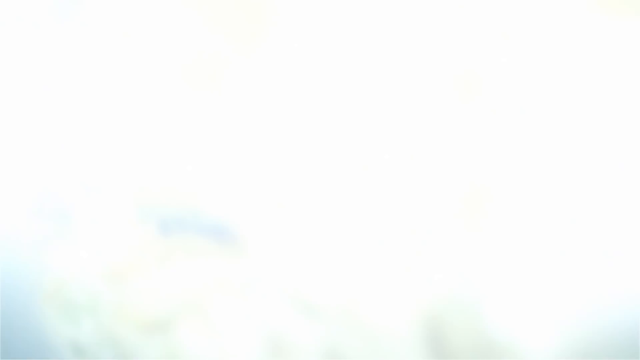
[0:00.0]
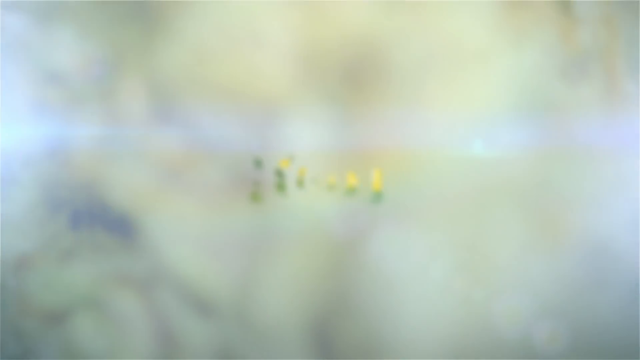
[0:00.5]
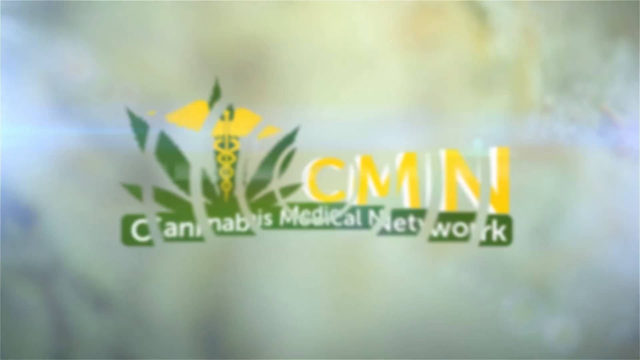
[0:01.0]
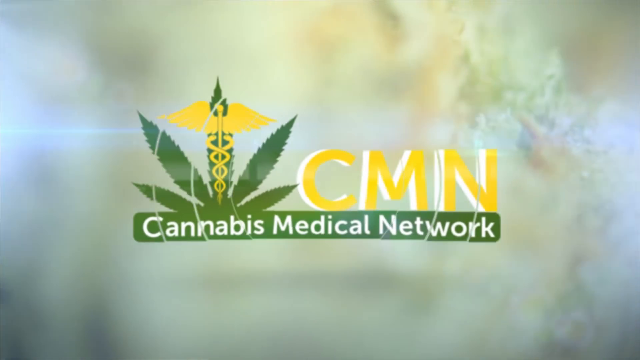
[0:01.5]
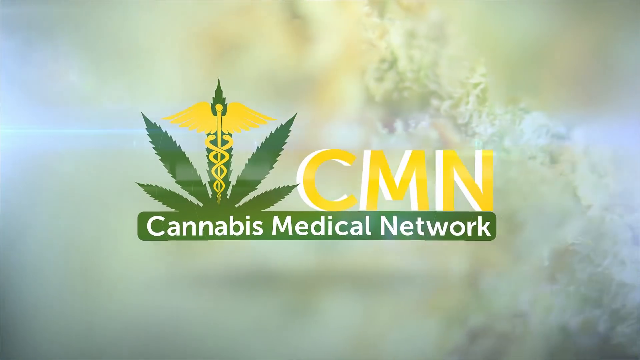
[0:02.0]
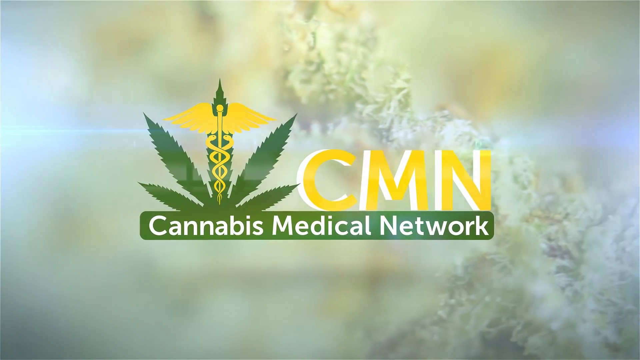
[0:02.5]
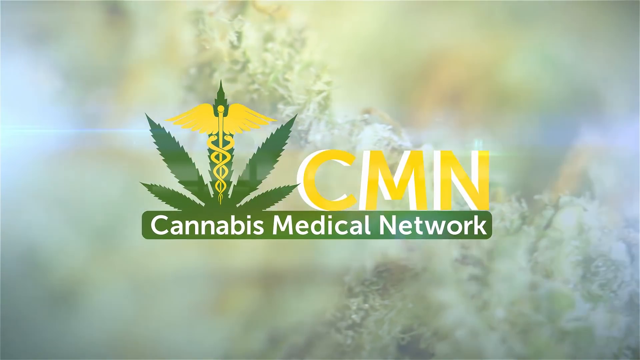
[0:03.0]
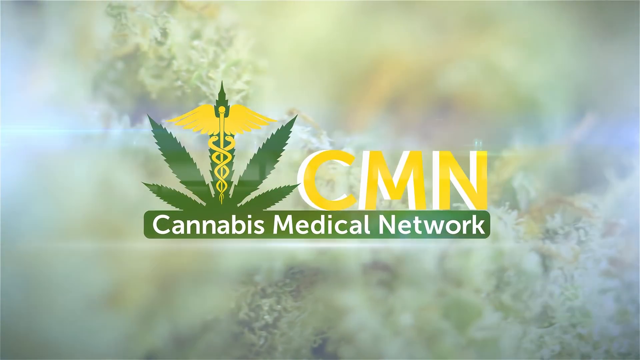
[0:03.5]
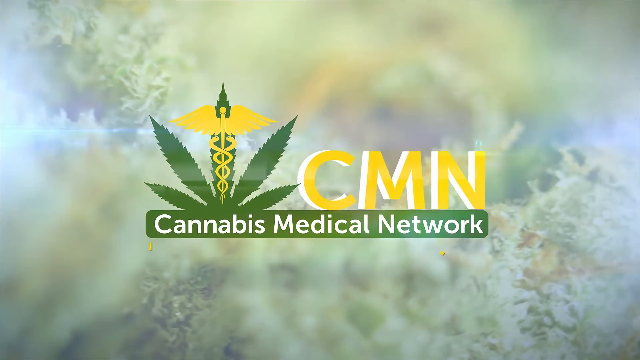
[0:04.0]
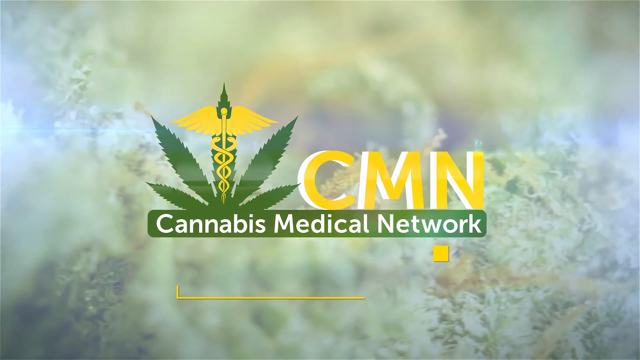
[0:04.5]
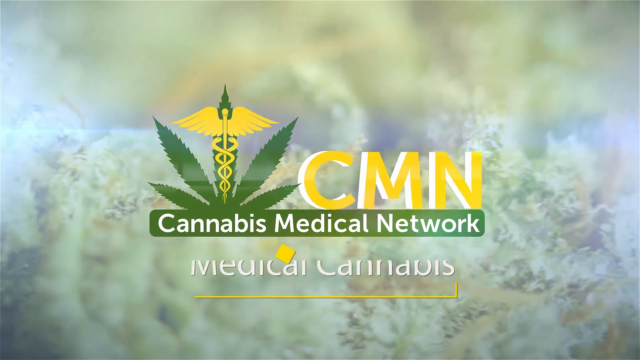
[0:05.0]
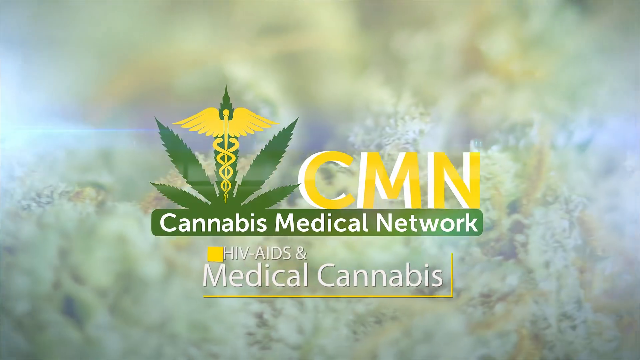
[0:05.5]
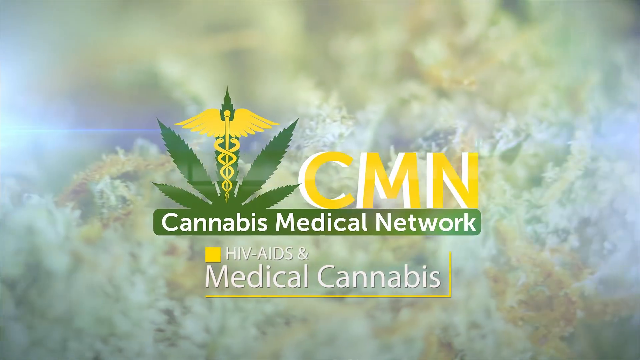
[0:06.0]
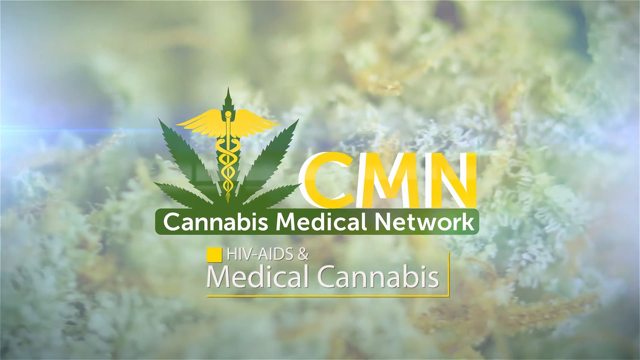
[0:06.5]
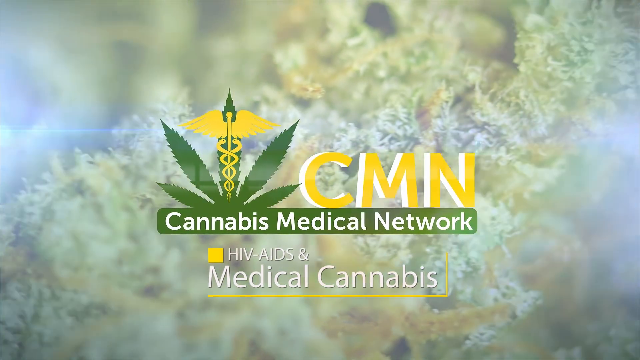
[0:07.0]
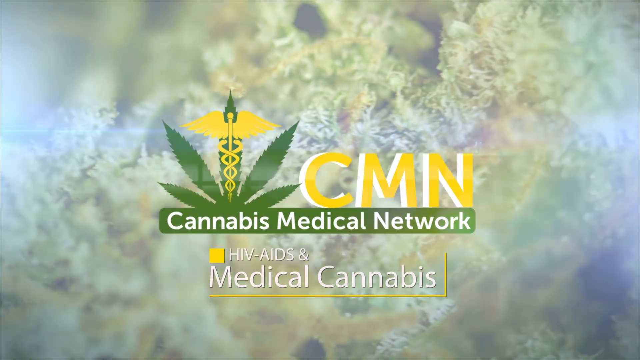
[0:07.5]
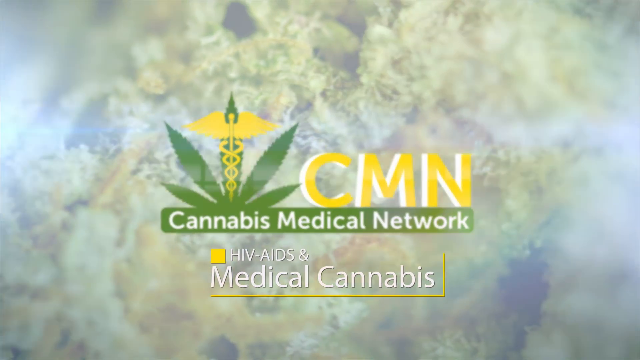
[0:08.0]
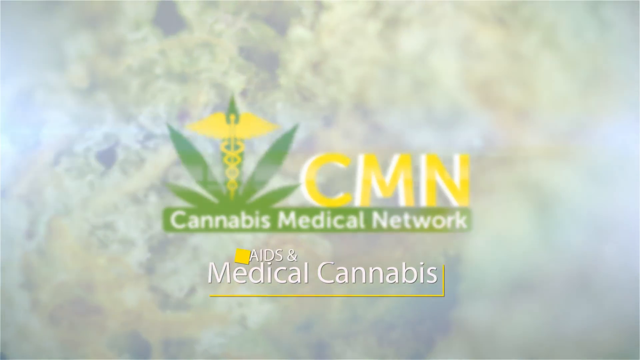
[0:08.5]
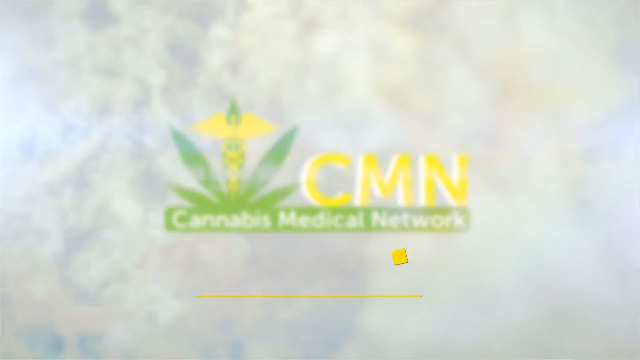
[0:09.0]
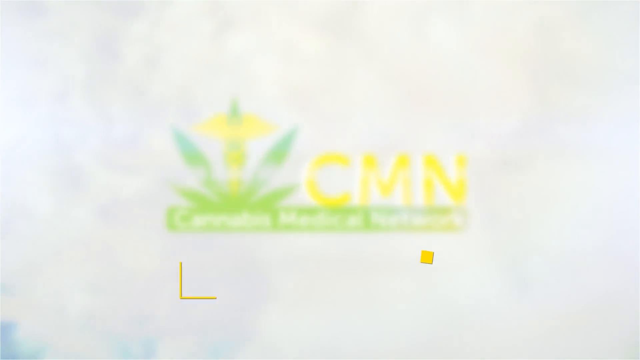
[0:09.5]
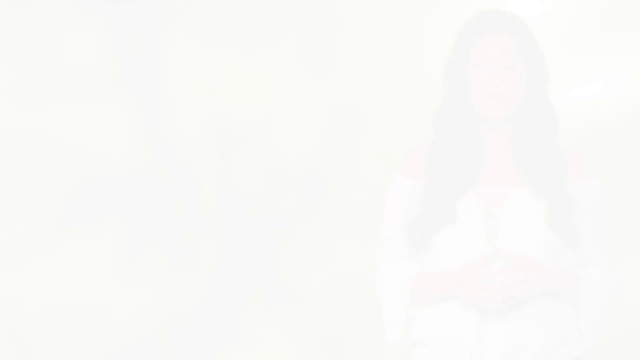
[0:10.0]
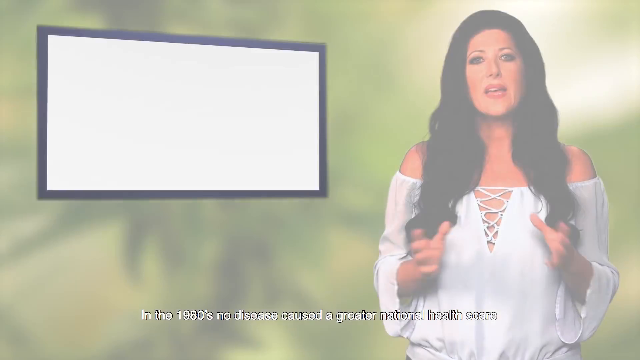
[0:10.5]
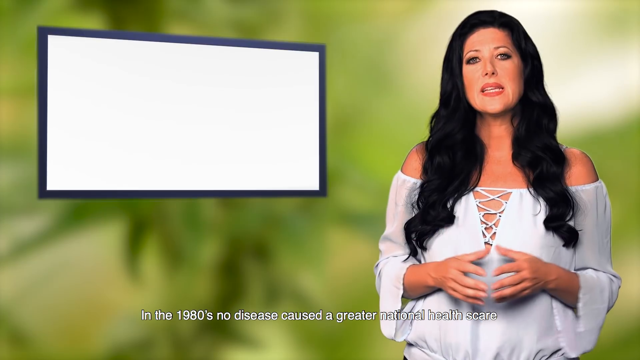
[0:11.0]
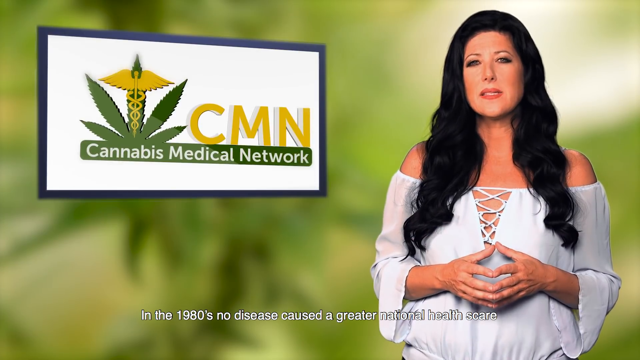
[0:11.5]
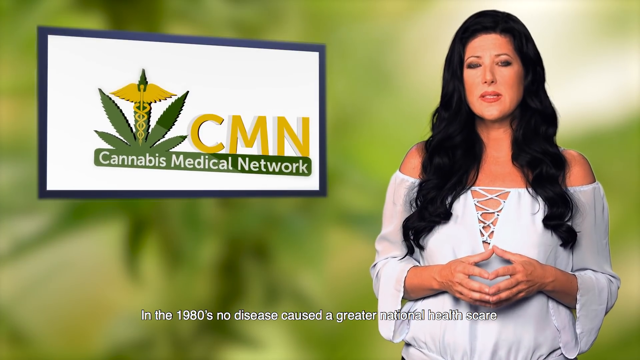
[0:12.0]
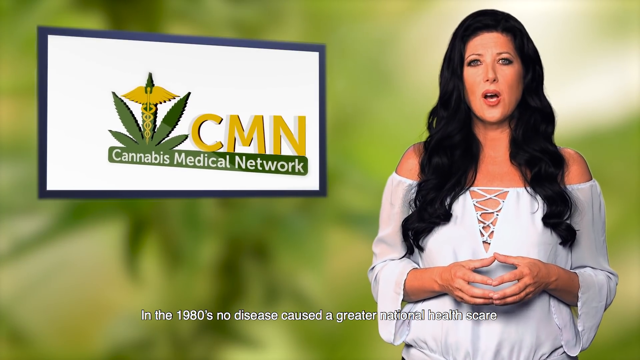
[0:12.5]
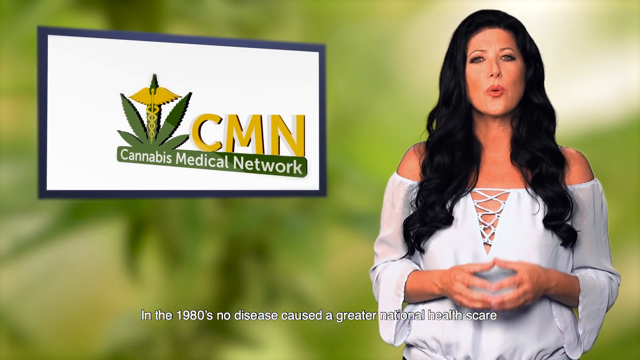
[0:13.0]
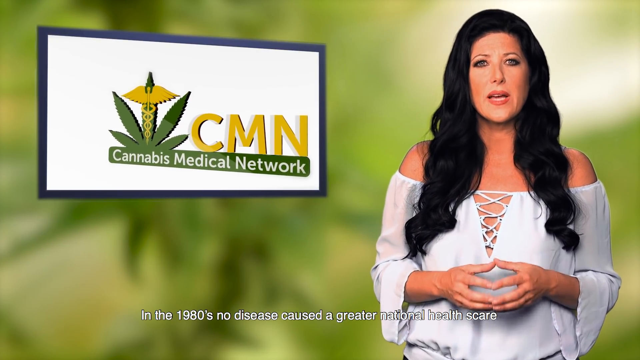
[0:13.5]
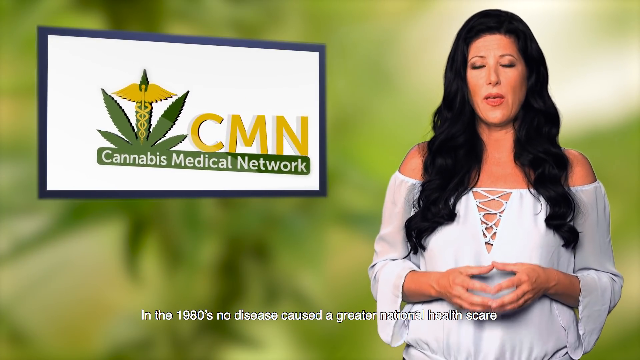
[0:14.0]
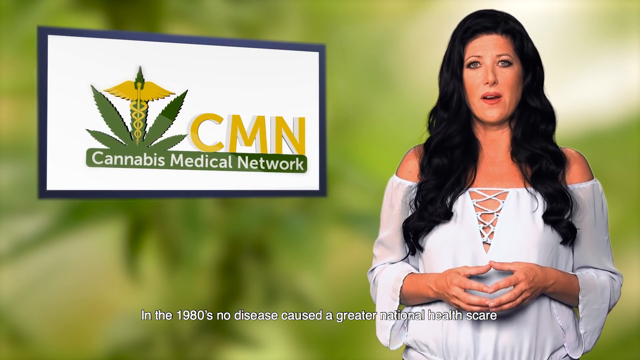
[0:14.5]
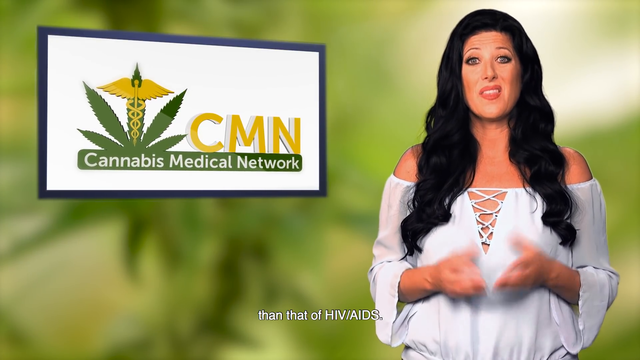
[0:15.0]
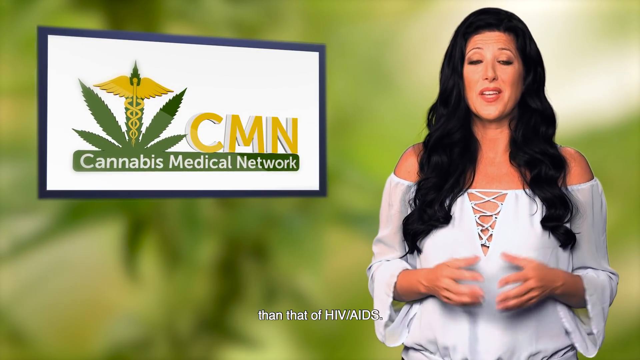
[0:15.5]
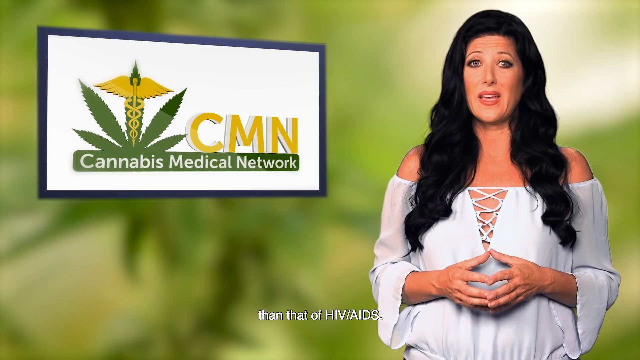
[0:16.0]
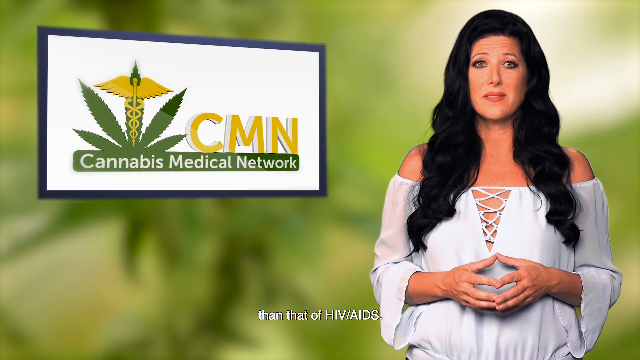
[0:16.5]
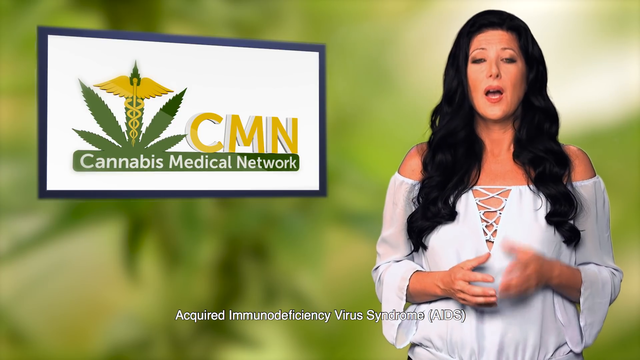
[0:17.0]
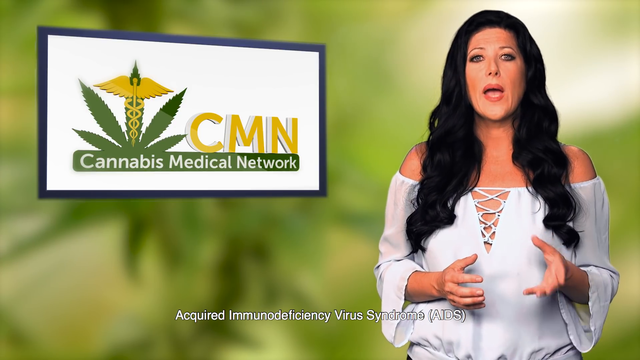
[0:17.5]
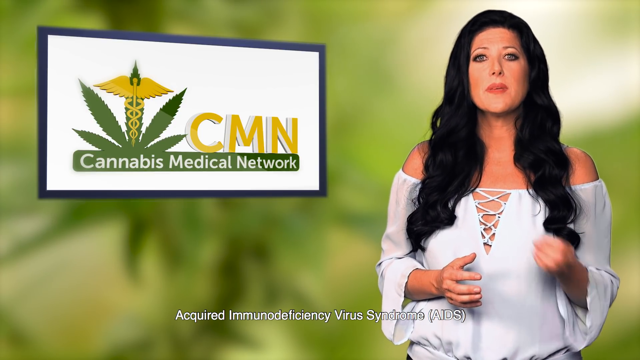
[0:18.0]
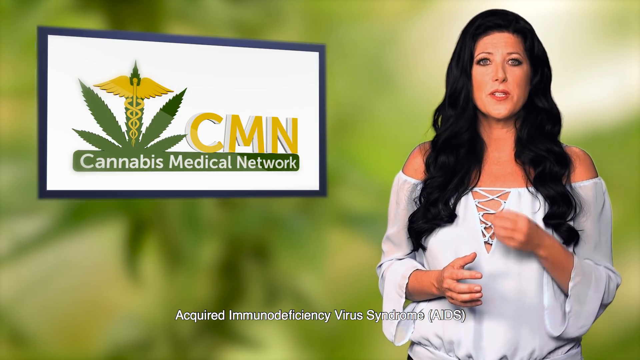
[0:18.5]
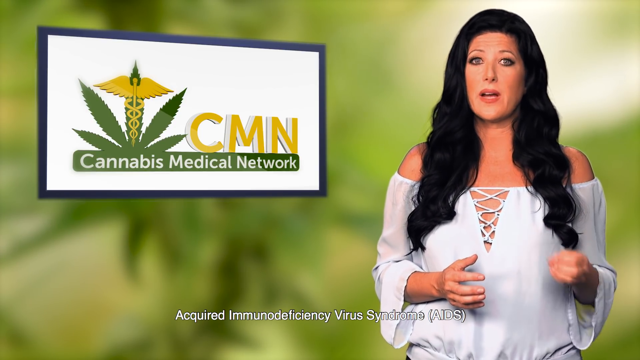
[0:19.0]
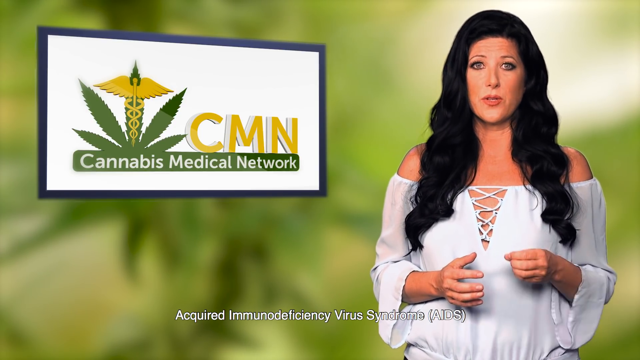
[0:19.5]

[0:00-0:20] The video opens with an animated introduction showing the letters "C-M-N" and a picture of a cannabis leaf with a medical emblem on top. The leaf is green, while the medical emblem and the C-M-N letters are yellow; CMN stands for Cannabis Medical Network. Next, a bud of marijuana is in the background, and it looks like it is spinning or rotating, with the text "HIV, AIDS, and medical cannabis." A woman with long black hair appears, wearing a white long-sleeved shirt that is kind of off her shoulders. She says, "In the 1980s, no disease caused a greater national health scare than that of HIV/AIDS, acquired immunodeficiency virus syndrome, AIDS." She looks to be the host or narrator speaking on the topic of HIV, AIDS, and medical cannabis.